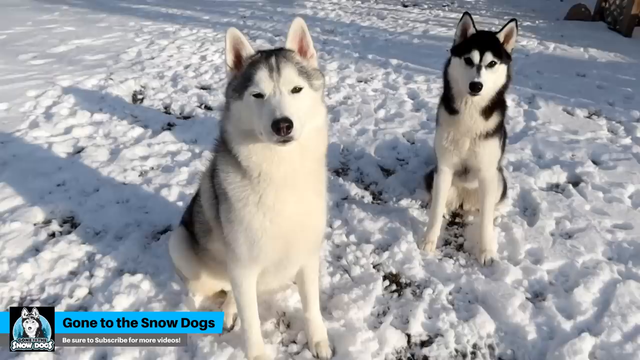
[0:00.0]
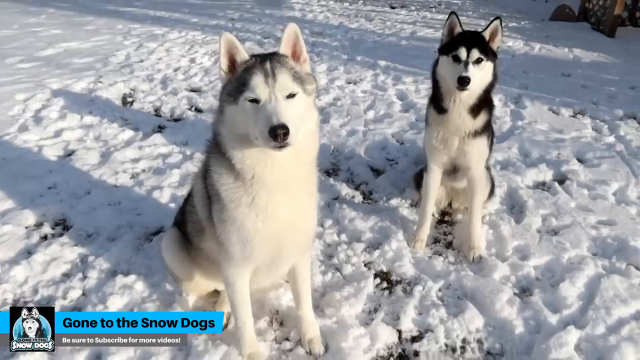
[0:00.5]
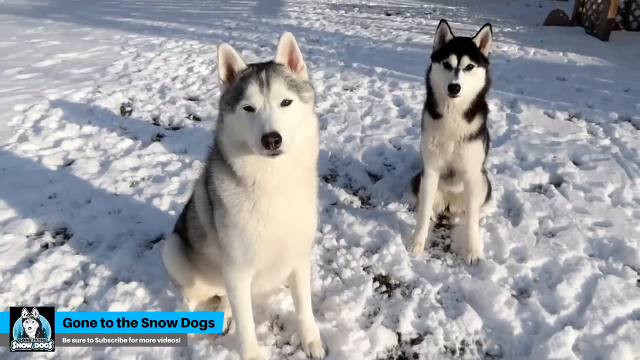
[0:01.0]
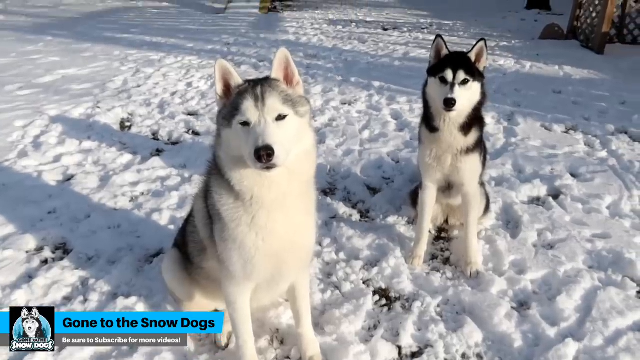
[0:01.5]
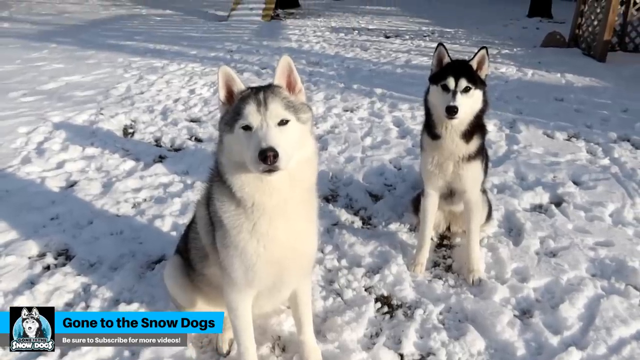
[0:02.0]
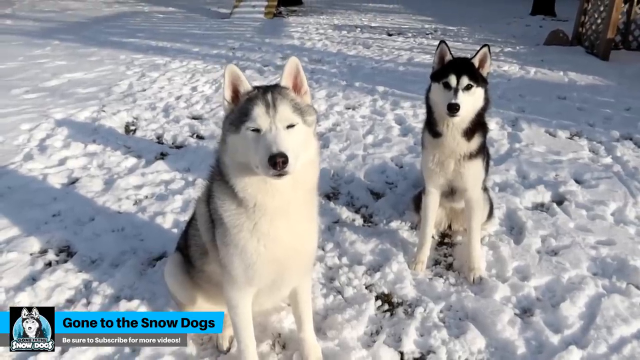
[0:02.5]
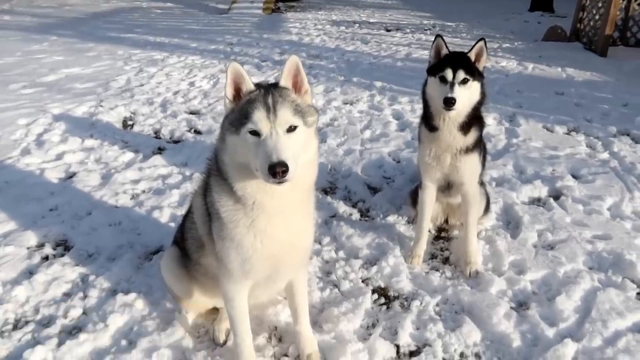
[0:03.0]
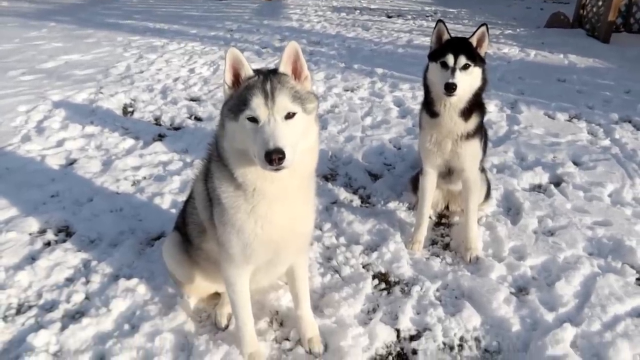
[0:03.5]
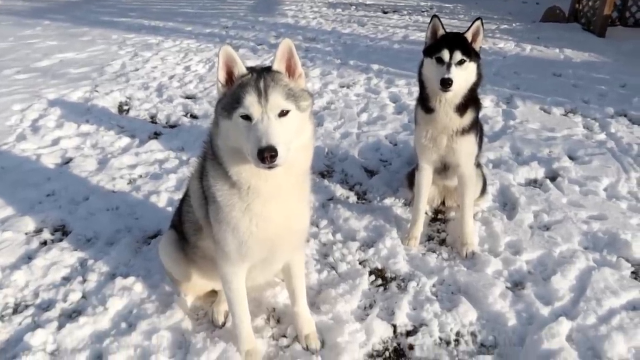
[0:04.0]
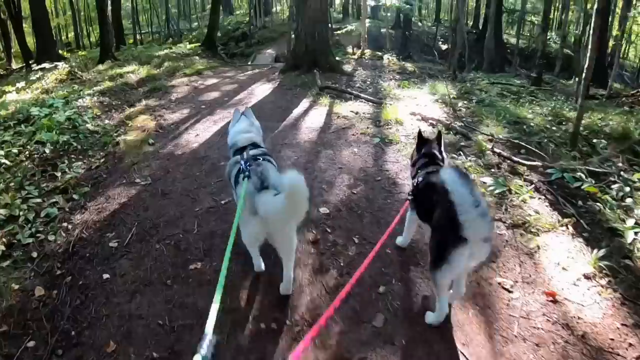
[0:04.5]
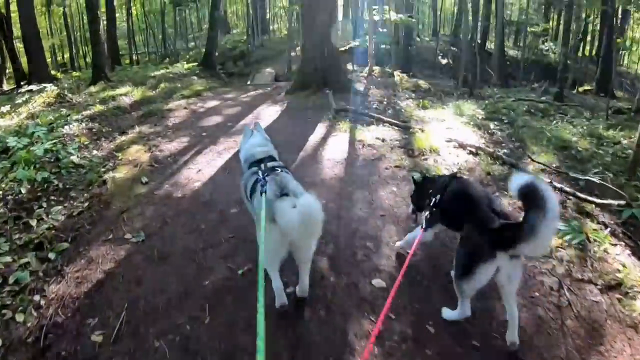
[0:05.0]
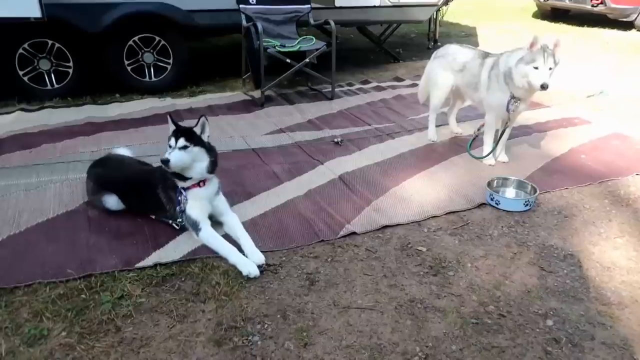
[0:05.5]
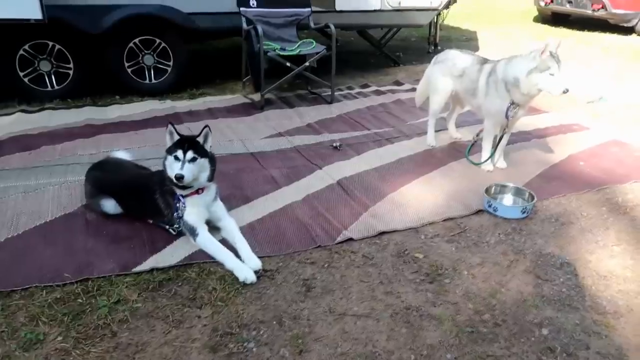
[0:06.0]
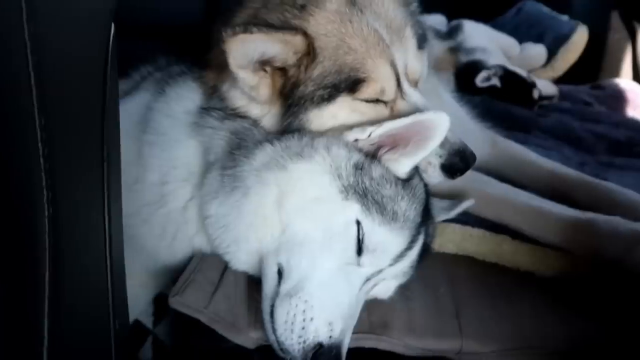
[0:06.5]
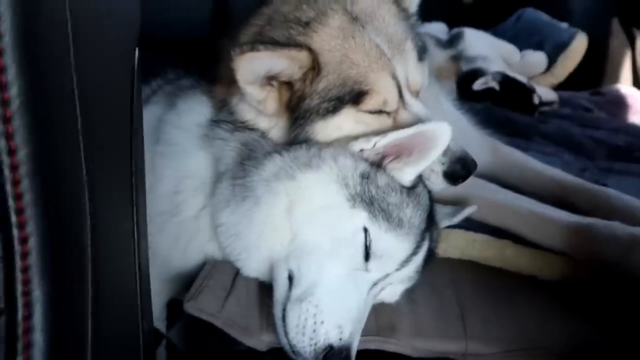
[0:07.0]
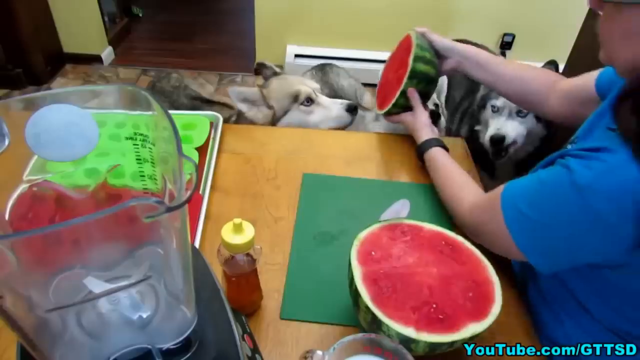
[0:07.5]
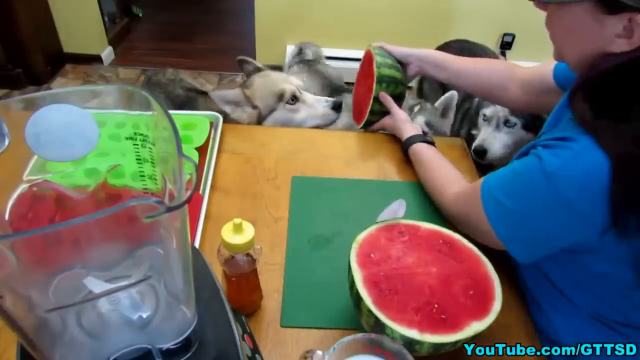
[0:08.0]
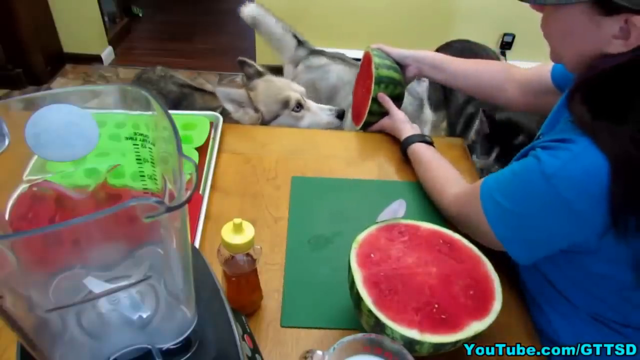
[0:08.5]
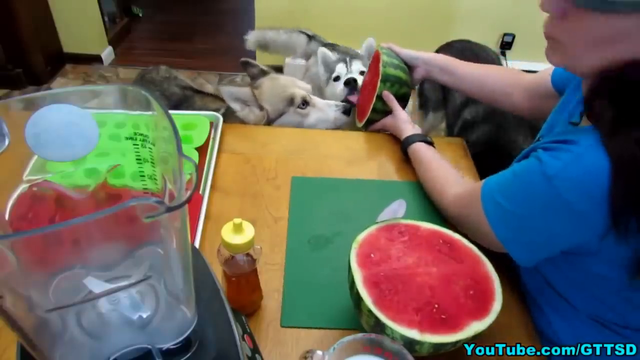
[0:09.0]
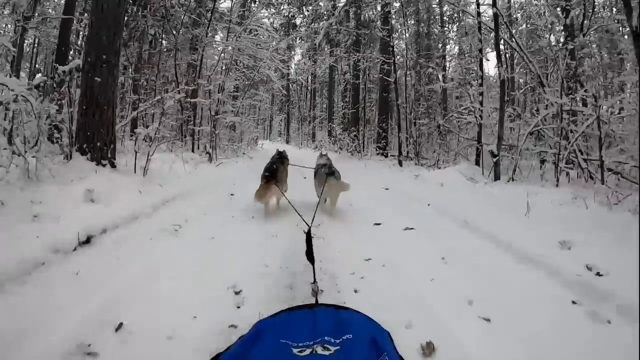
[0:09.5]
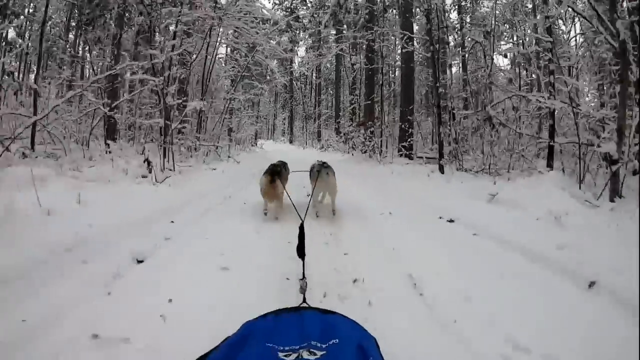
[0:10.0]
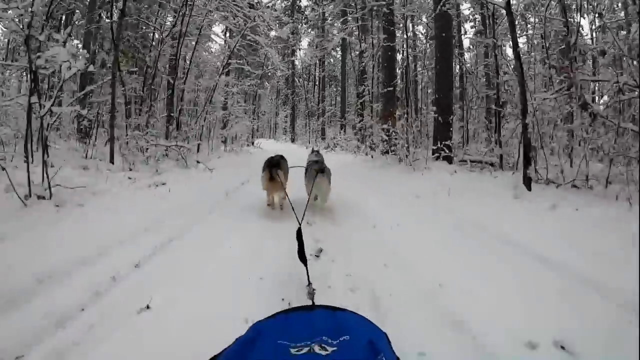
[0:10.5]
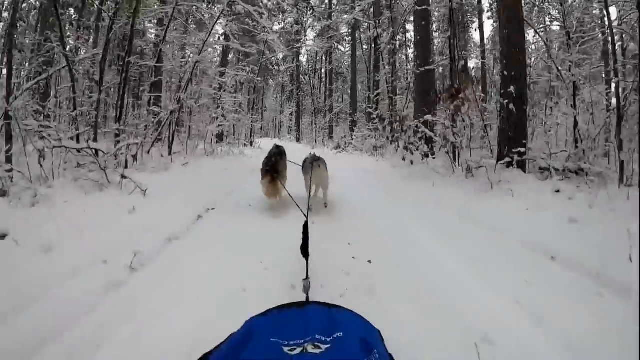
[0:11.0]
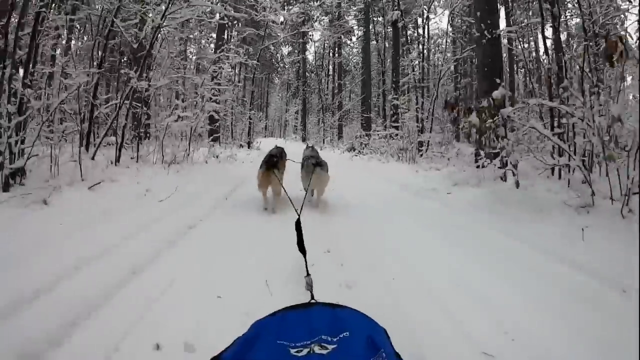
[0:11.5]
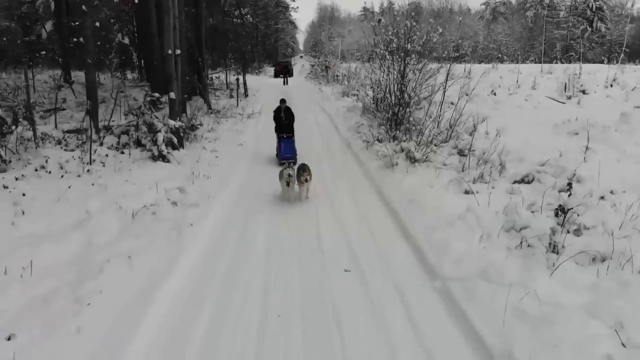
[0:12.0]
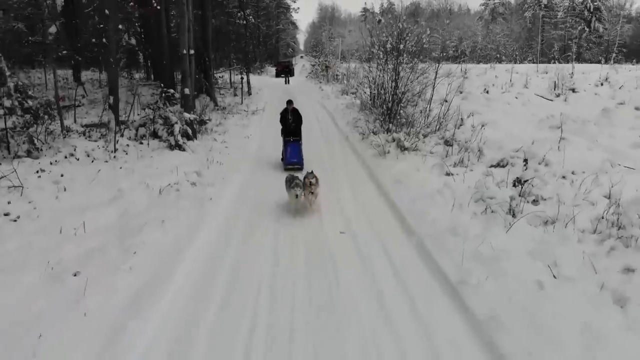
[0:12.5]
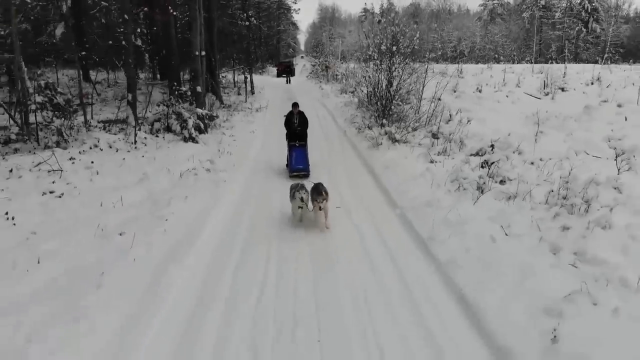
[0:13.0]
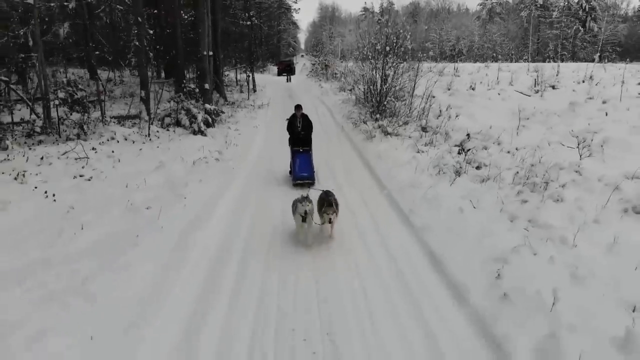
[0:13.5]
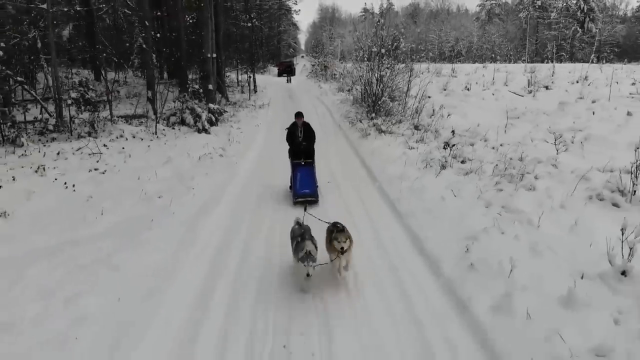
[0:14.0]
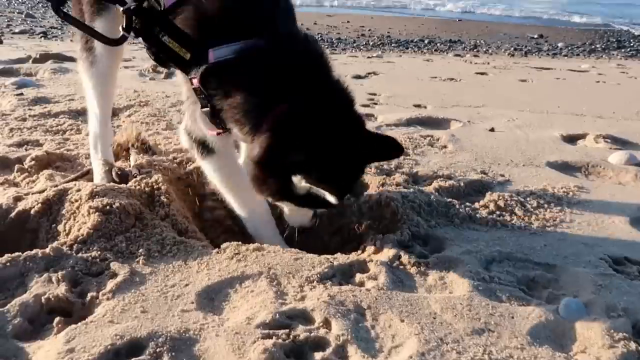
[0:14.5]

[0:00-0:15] Several different settings appear, with the same two dogs throughout: a snowy setting, an indoor setting and a beach setting. The dogs dig, play, sit and sleep, and at one point a person in a blue shirt feeds them watermelon. In the snow, the dogs drag a sled of sorts with a person on it, and at another point they walk on leashes along a nature trail of sorts in bright daylight. A subtitle reads "Gone to the Snow Dogs," presumably the title. The dogs appear very happy and very bonded throughout.